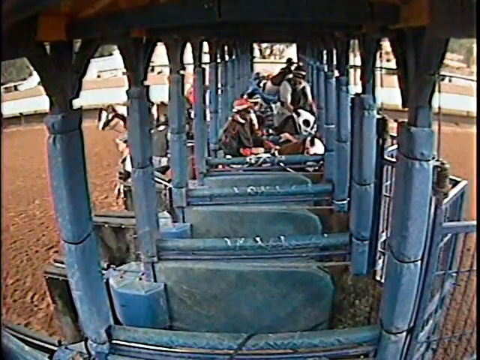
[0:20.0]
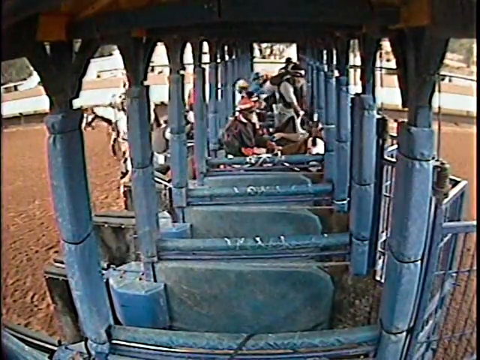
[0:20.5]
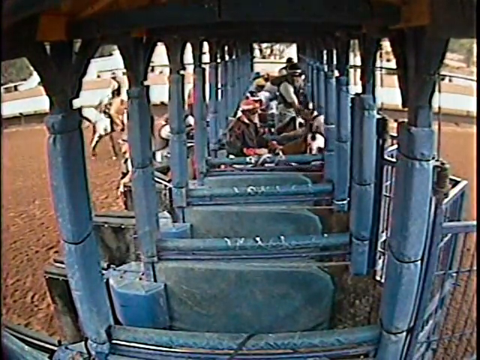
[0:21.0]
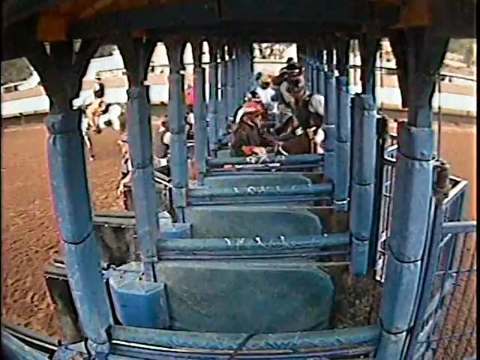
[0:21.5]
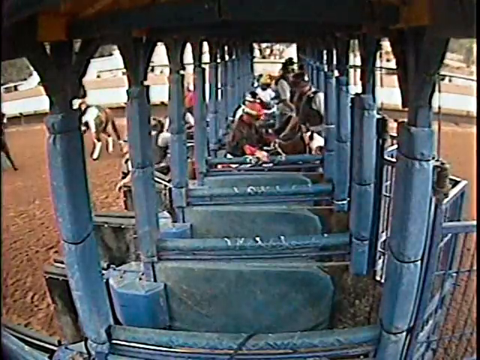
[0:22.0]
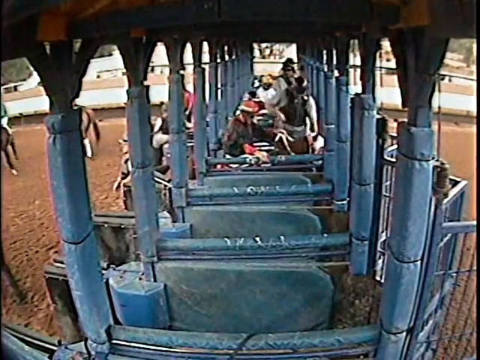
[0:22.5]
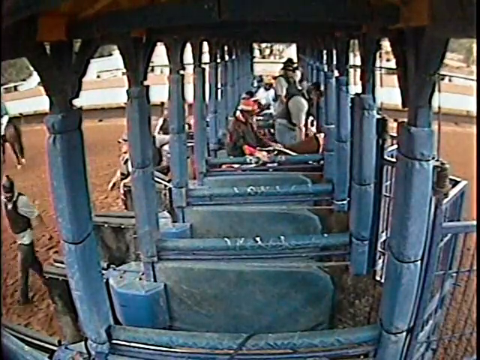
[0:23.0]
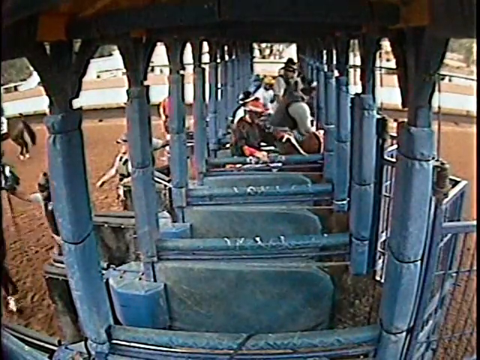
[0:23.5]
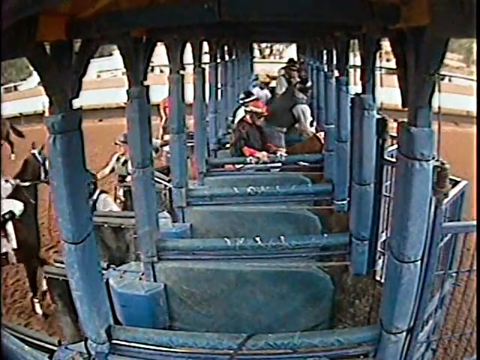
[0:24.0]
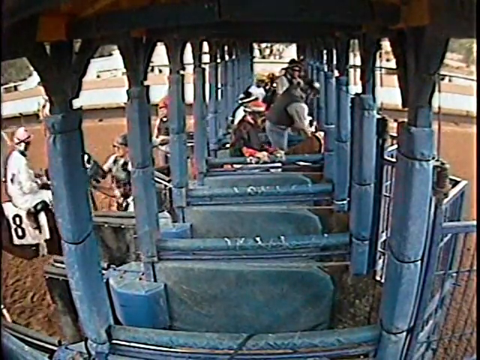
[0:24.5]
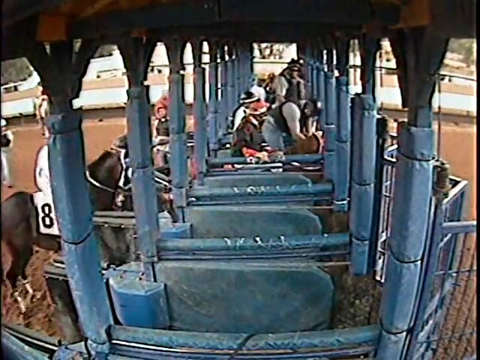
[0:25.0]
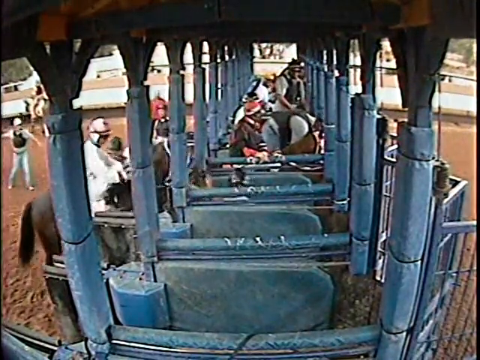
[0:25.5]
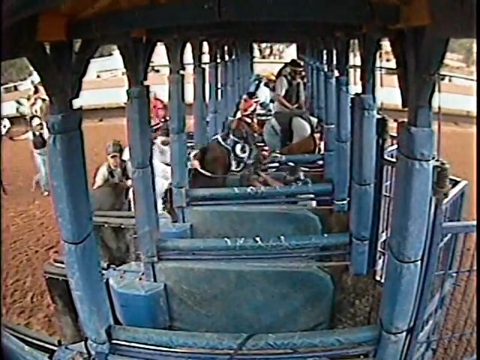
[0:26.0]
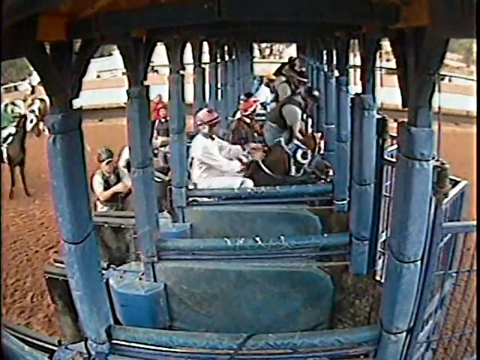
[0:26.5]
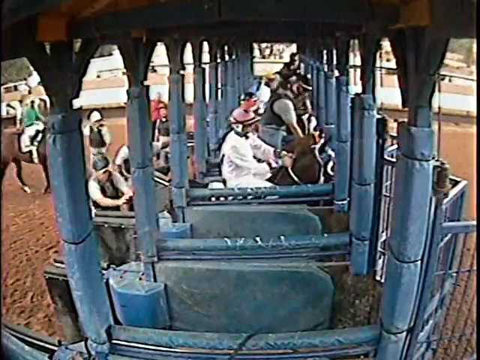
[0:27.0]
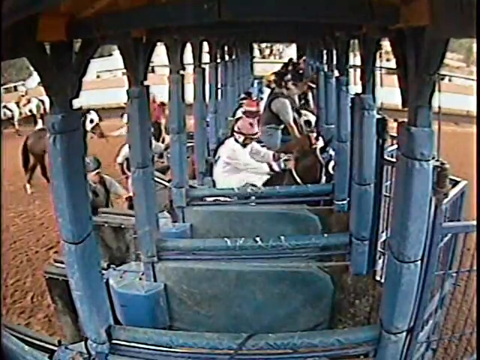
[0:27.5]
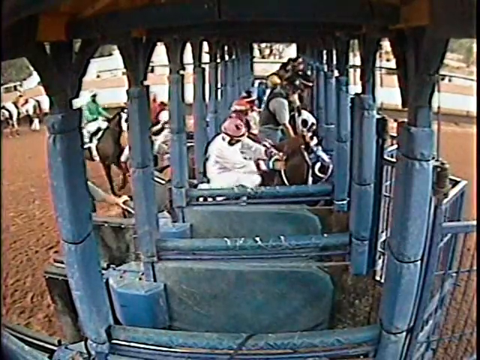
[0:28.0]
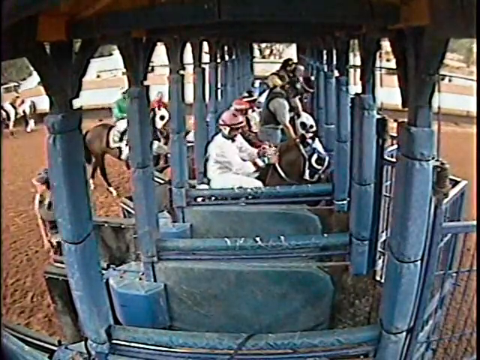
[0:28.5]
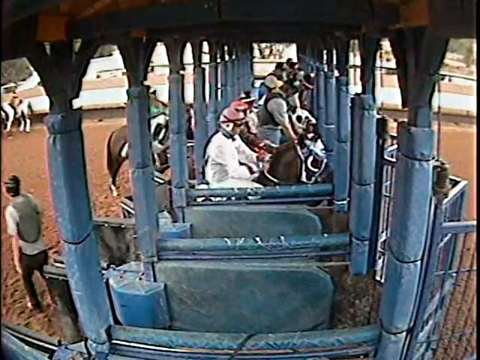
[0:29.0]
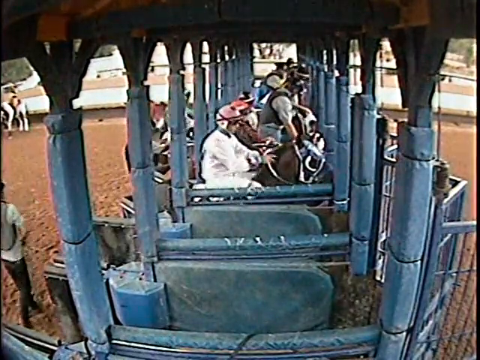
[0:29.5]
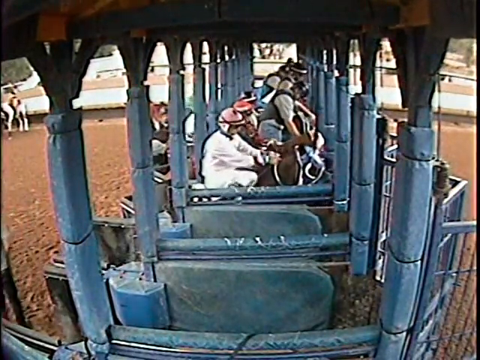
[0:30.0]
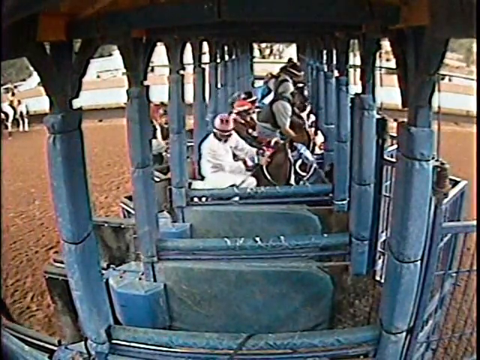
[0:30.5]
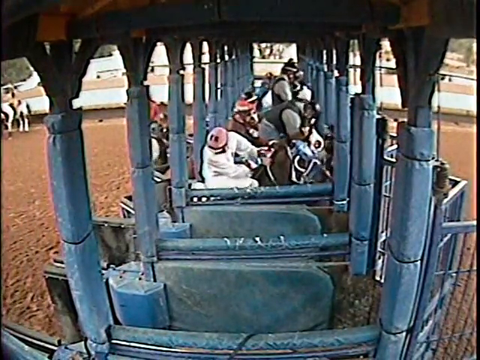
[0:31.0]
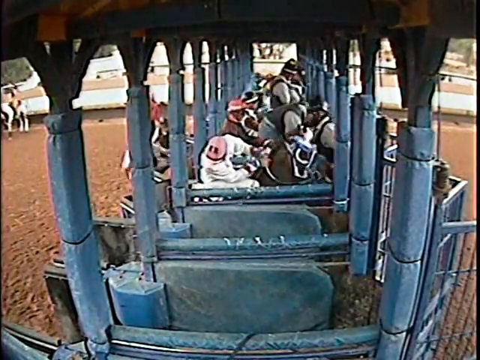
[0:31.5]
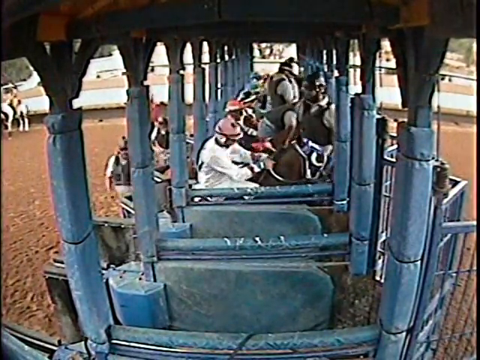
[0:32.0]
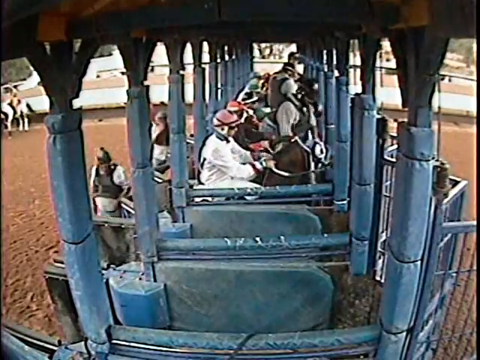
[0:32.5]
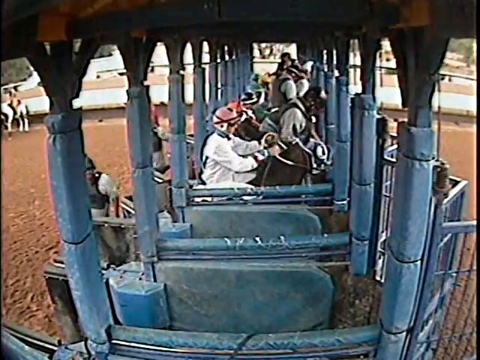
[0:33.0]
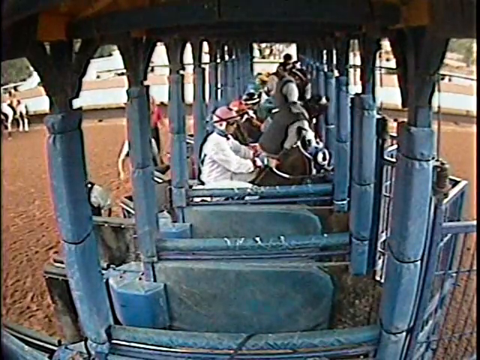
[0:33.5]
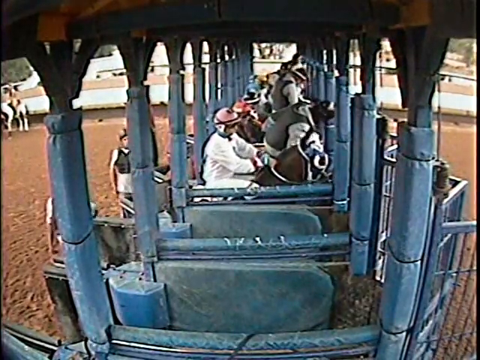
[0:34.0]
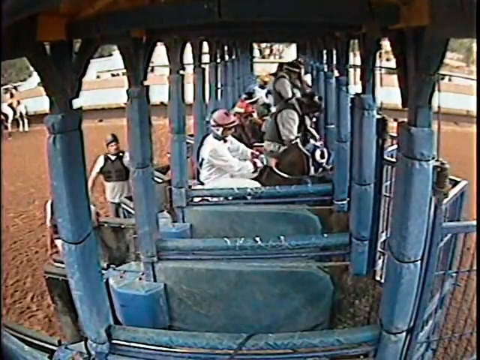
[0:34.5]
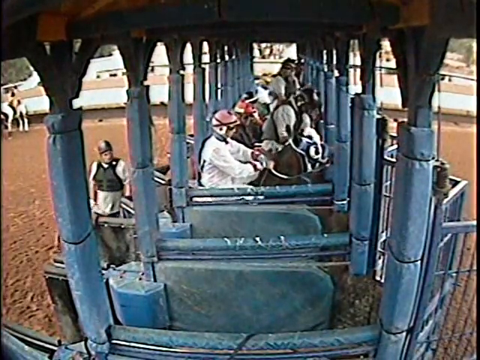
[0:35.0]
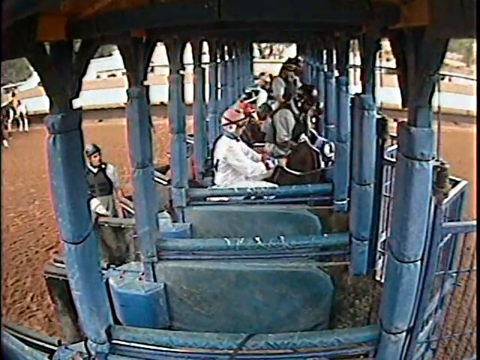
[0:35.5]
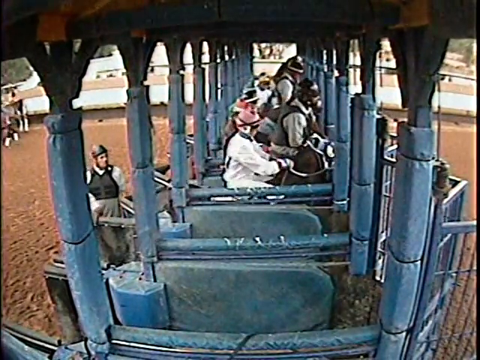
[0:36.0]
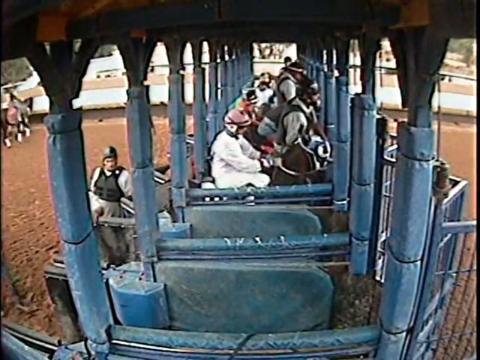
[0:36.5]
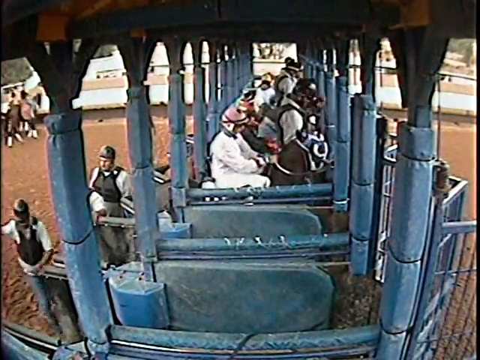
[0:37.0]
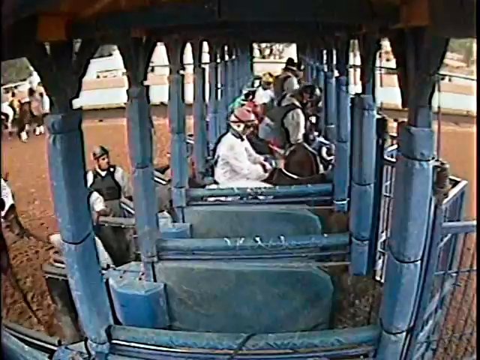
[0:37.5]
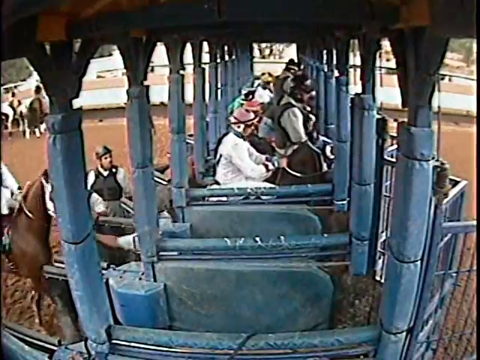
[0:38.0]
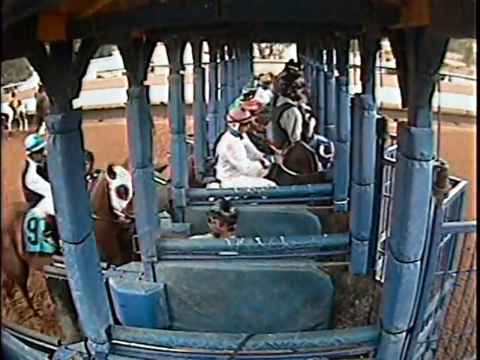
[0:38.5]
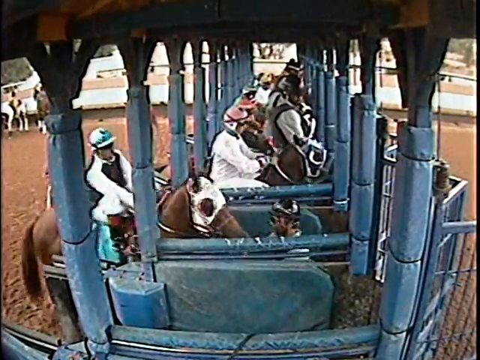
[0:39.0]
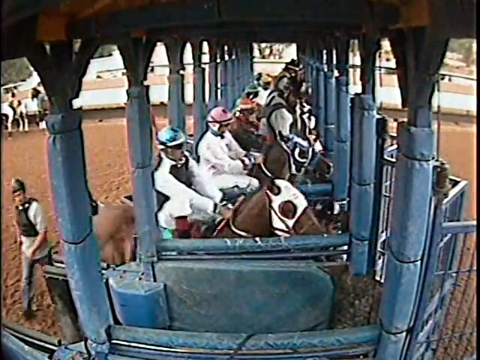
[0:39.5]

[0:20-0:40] The footage appears to be from the beginning of a horse race, with the point of view looking down the length of the inside of the starting gate. The stalls are about halfway filled with horses and jockeys. On the left side is the dirt ground where the horses are being led in. The horses face the right, where the starting gates are all closed. The structure is gray or blue. Light-colored stands are in the background. Horses are led into their stalls while the jockeys get in position, and assistants lead the horses in and then leave the stalls. Number nine, closest to the camera, is led into its spot. There is a lot of movement. The horses all wear what look like colors matching their jockeys, and they also wear face coverings.